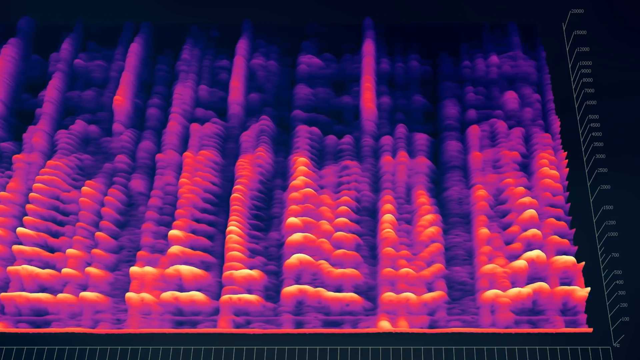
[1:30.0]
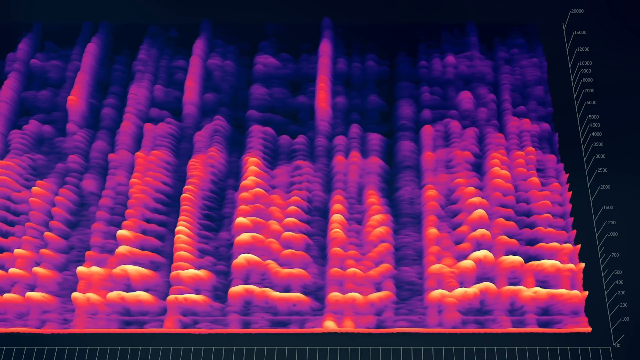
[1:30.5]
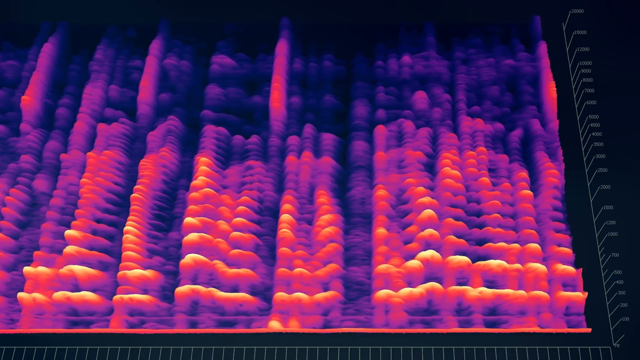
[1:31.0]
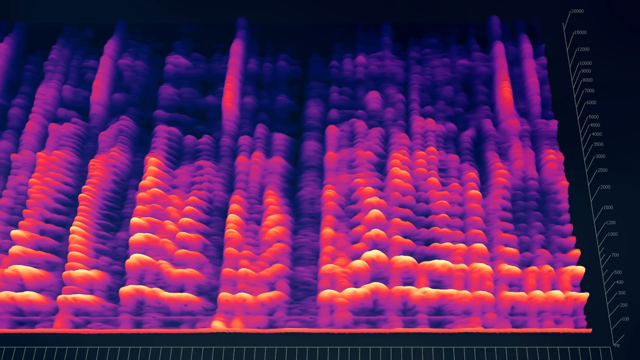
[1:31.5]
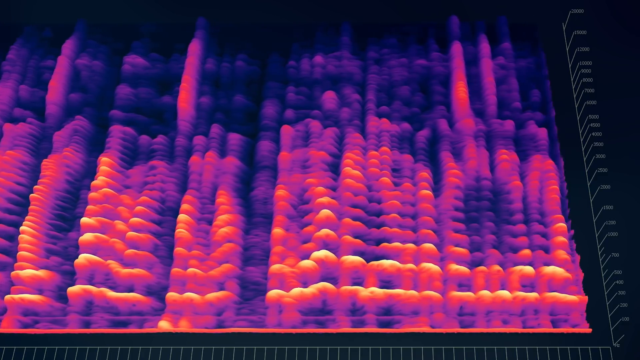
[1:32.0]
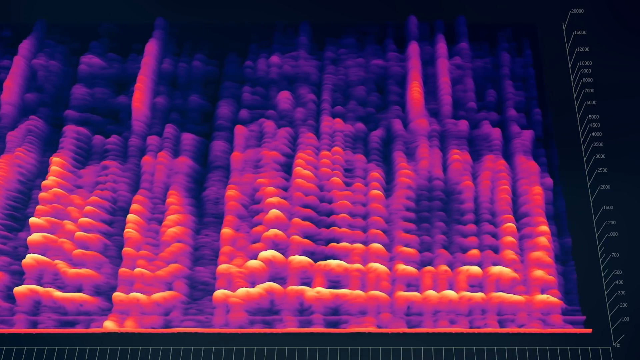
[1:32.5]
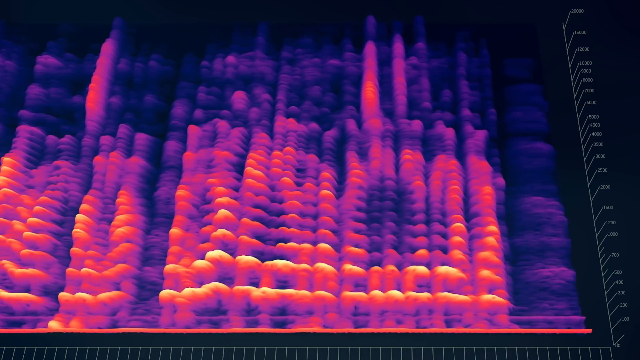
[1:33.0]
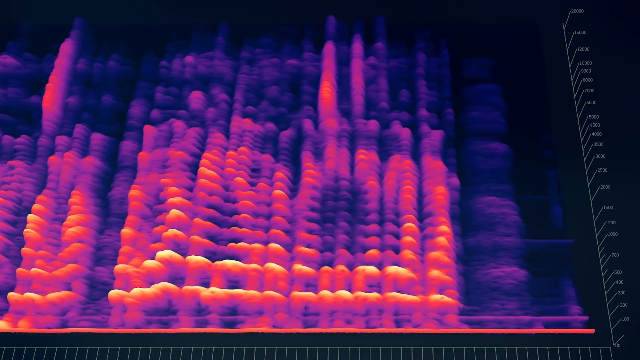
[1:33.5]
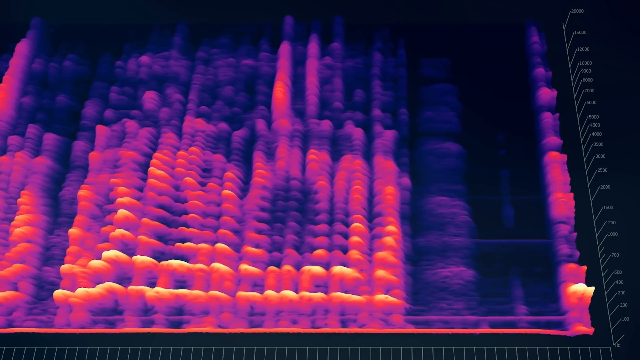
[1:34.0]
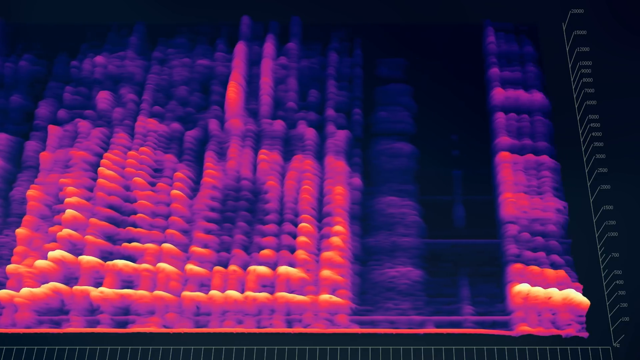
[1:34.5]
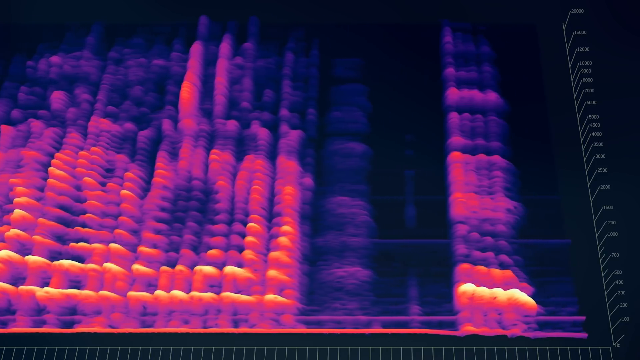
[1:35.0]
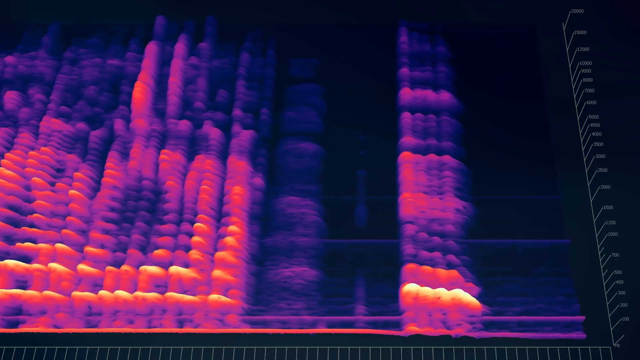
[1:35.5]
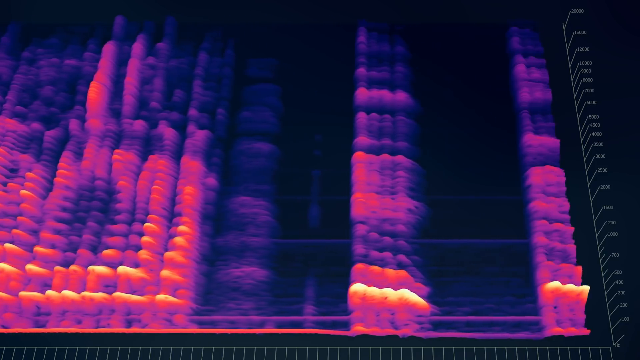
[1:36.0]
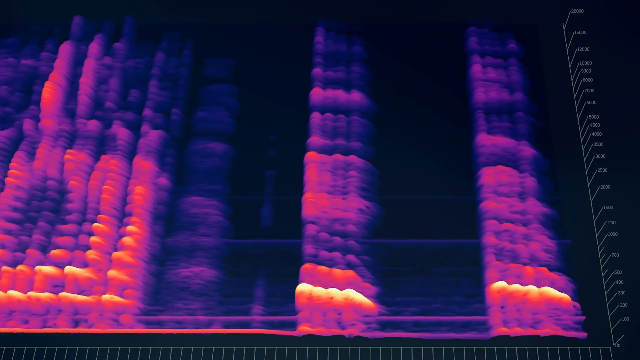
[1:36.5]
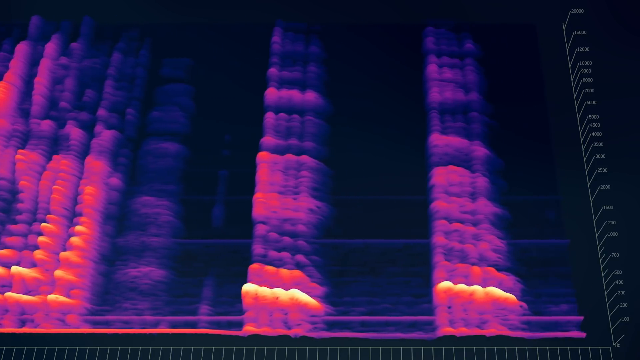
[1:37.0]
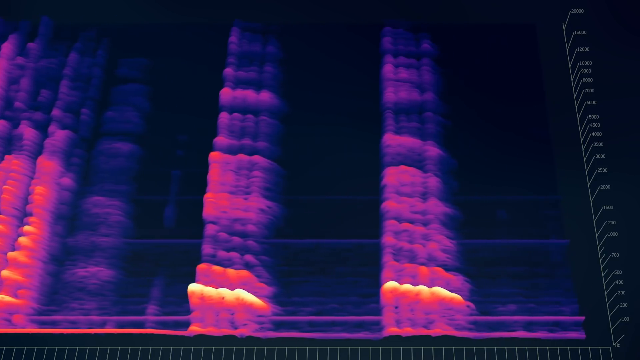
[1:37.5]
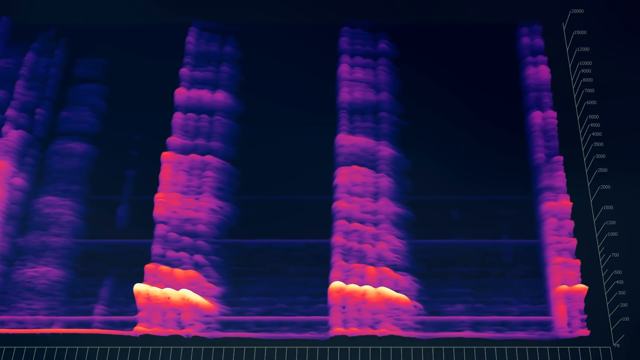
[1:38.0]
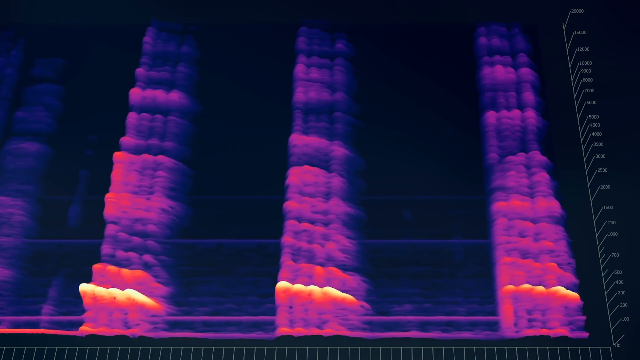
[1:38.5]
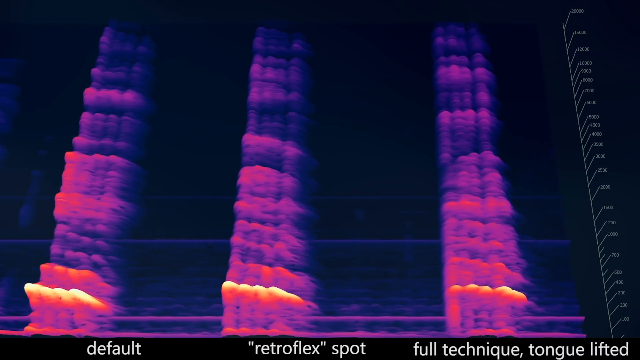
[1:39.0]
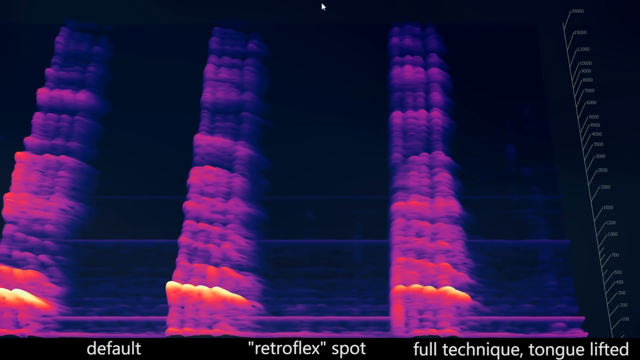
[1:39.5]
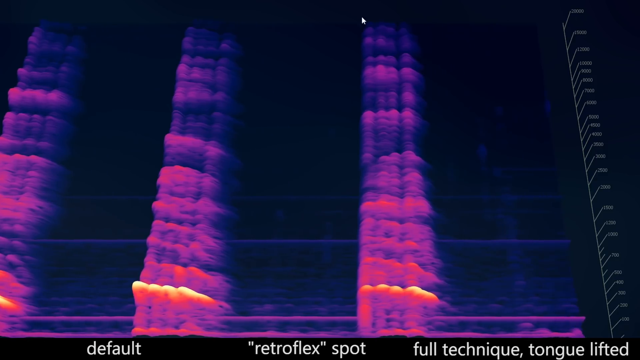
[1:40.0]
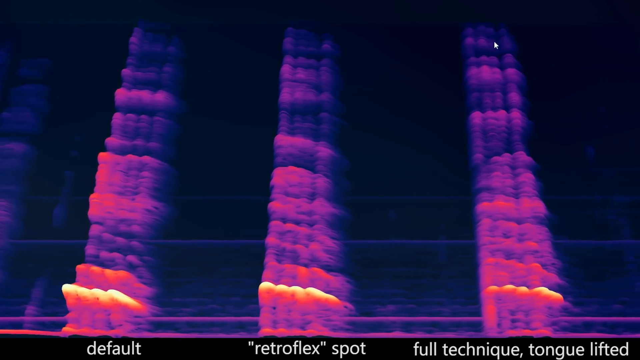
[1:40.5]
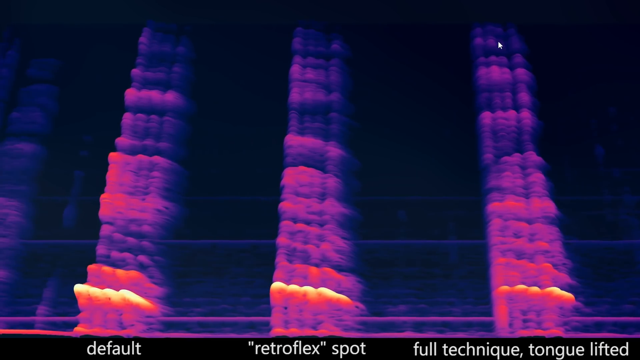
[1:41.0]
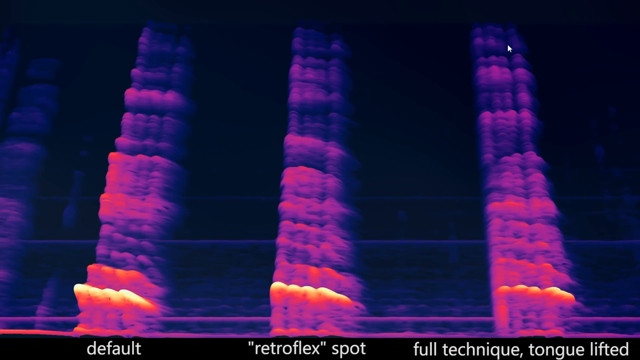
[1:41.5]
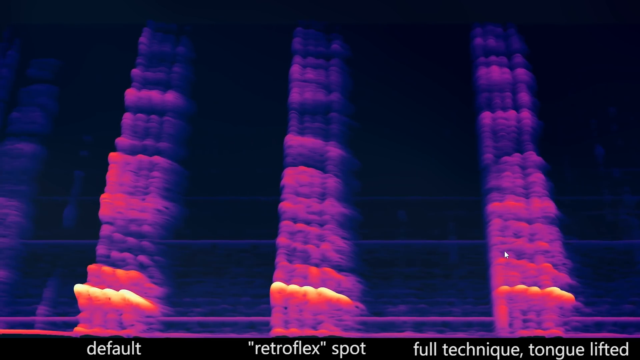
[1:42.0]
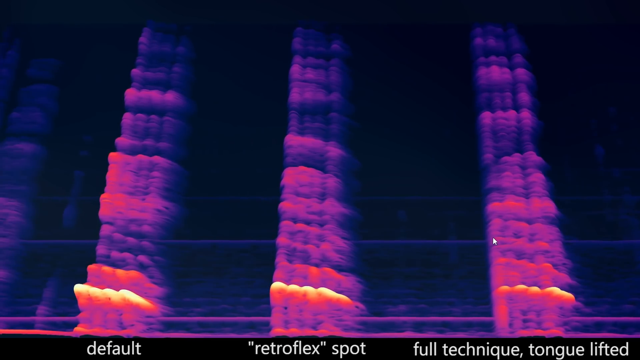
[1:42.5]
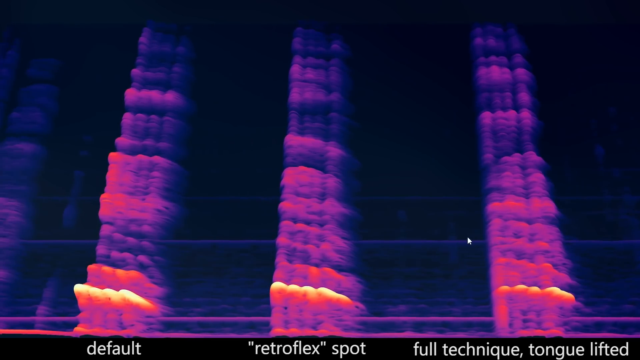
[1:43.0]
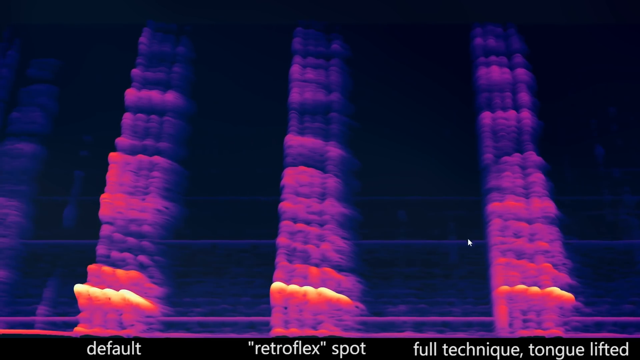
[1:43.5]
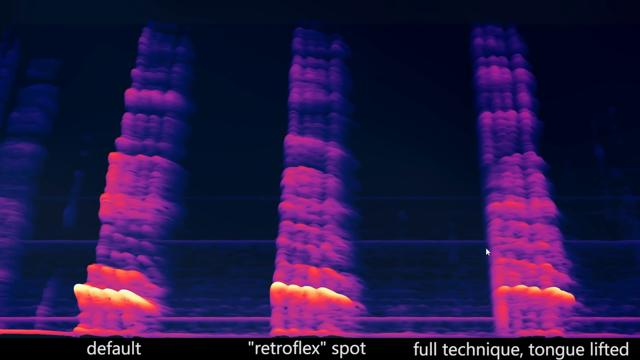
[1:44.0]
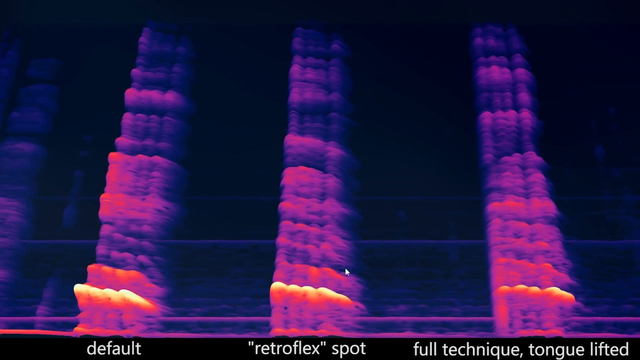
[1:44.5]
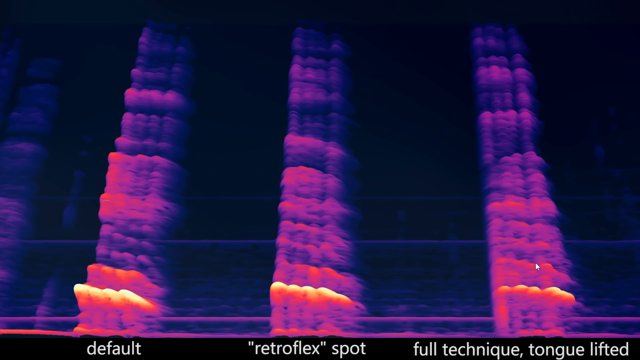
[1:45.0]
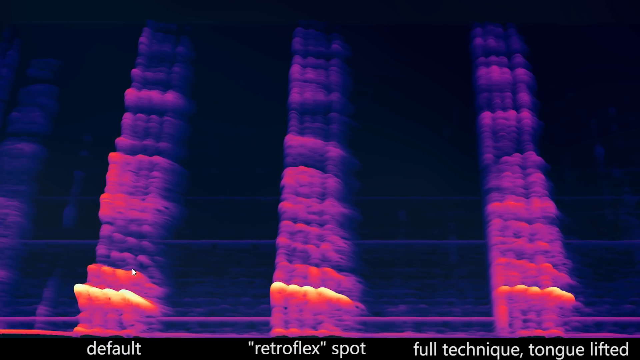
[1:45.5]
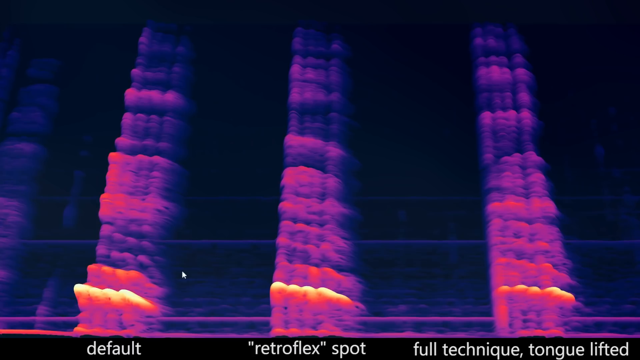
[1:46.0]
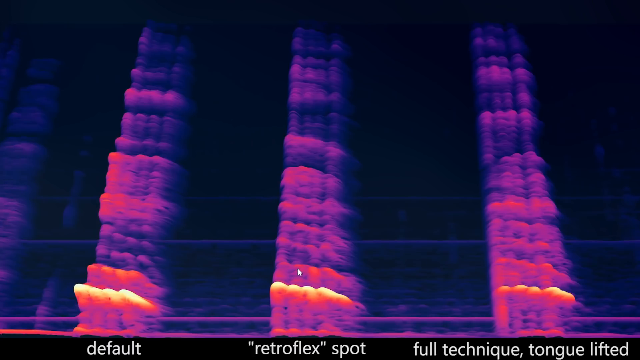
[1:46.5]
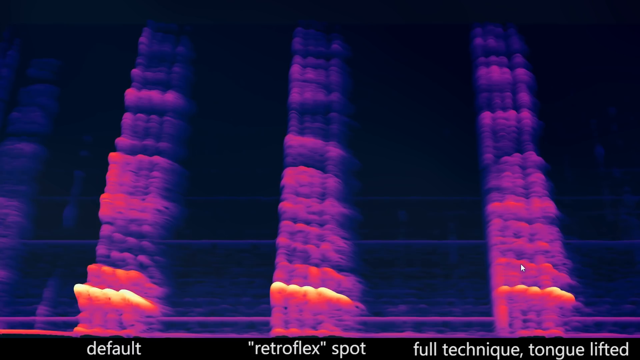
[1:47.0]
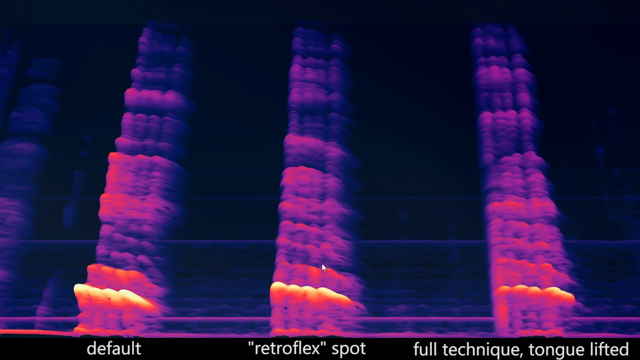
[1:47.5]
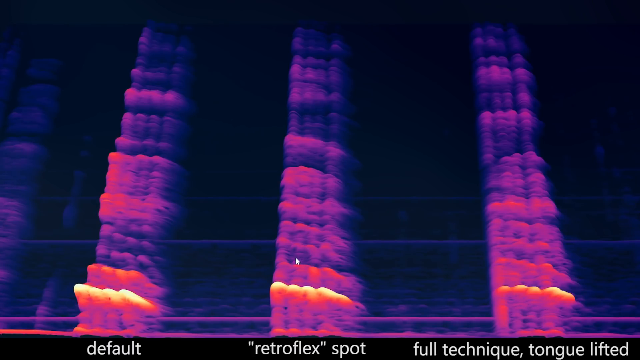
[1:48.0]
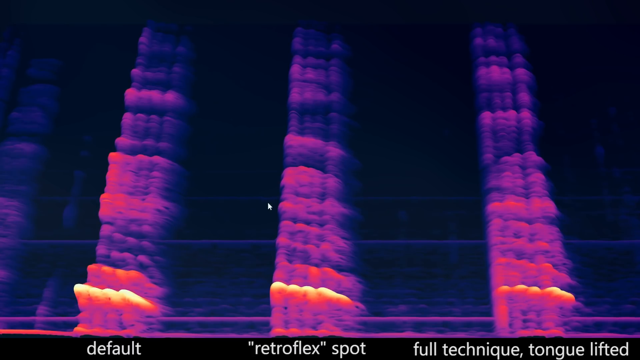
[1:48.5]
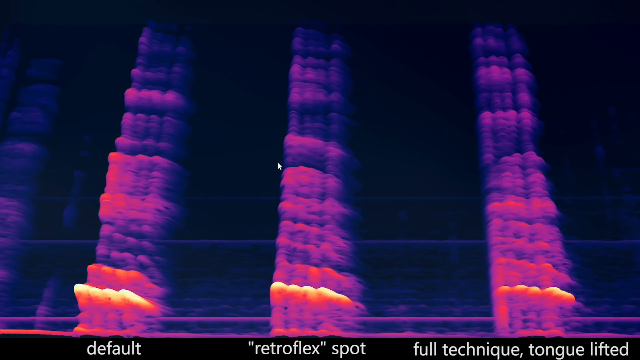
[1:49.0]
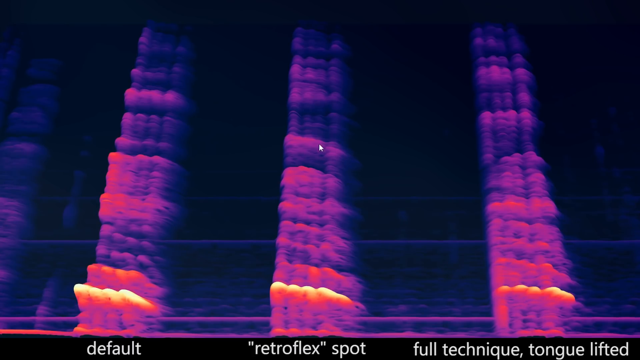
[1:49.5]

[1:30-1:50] A mass of orange and purple bumpy colors fills the view along with lines of color and a somewhat hazy, cloudy effect. A very large white line to the side has numbers going from 100 all the way to 20,000. The bumps move from right to left, and there are dark flat-colored areas with some space between the bumpy areas. The mouse moves back toward the left and pauses, then moves around, somewhat hovering over some of the areas. Text at the bottom reads "default retroflex spot and full technique tongue lifted." The visuals have a somewhat vaporwave-esque look.